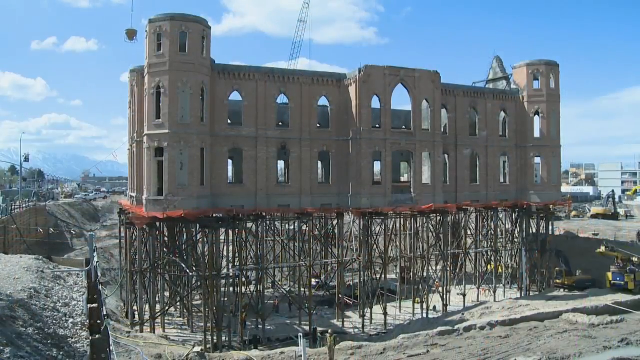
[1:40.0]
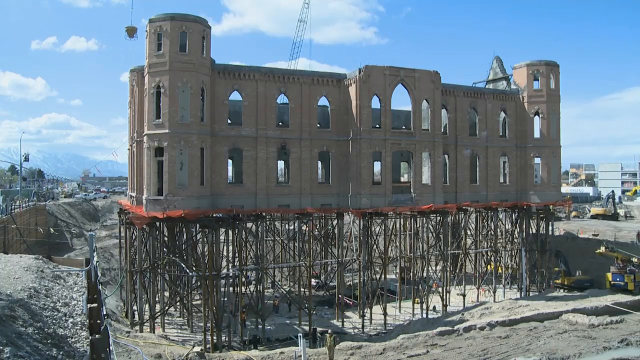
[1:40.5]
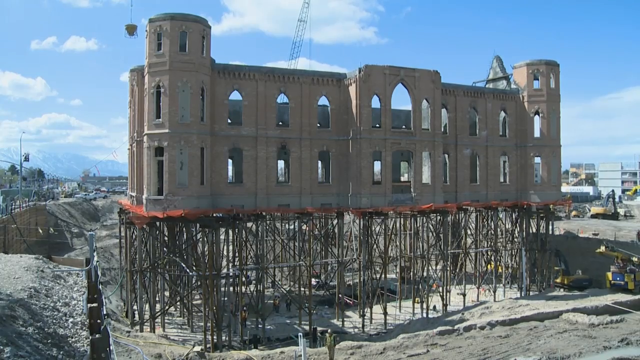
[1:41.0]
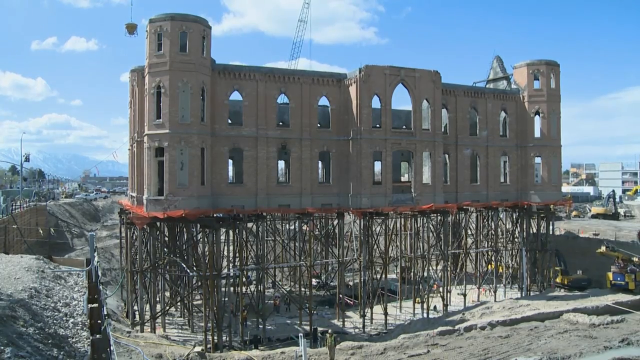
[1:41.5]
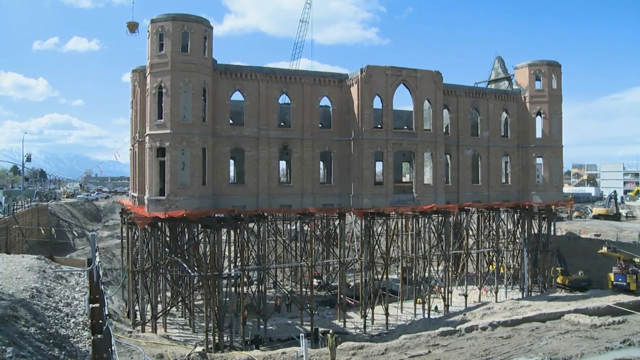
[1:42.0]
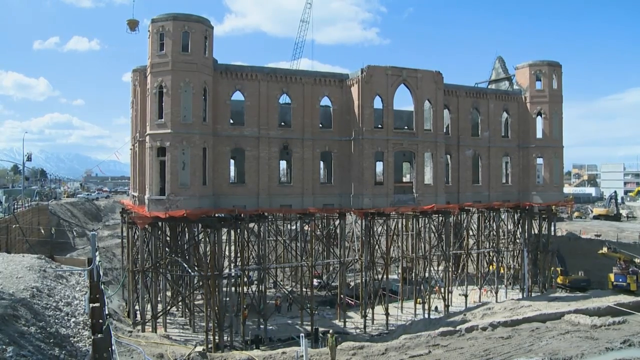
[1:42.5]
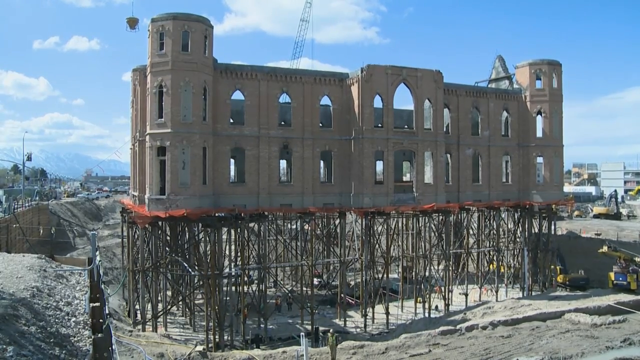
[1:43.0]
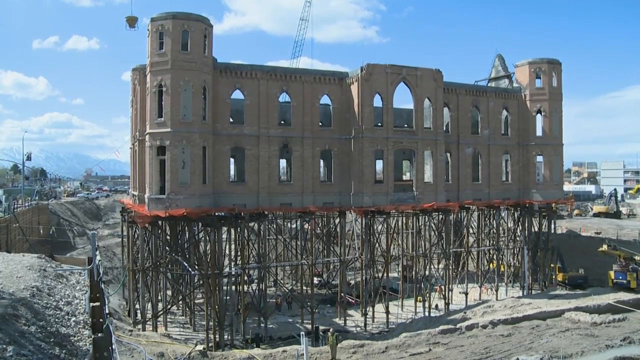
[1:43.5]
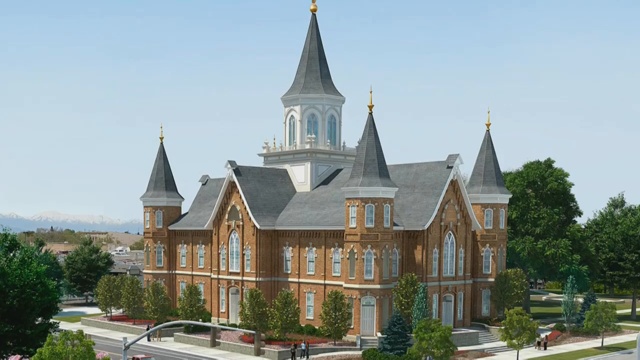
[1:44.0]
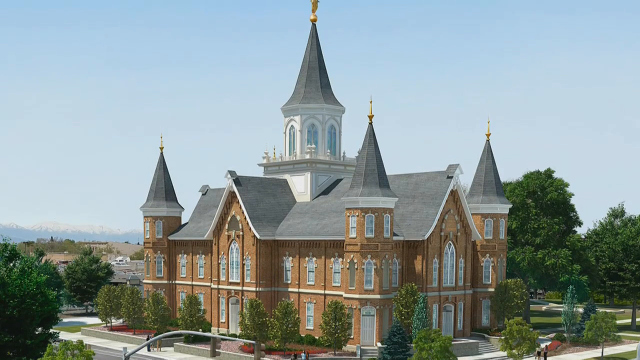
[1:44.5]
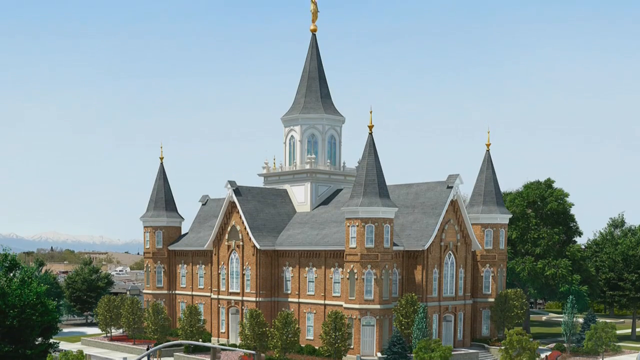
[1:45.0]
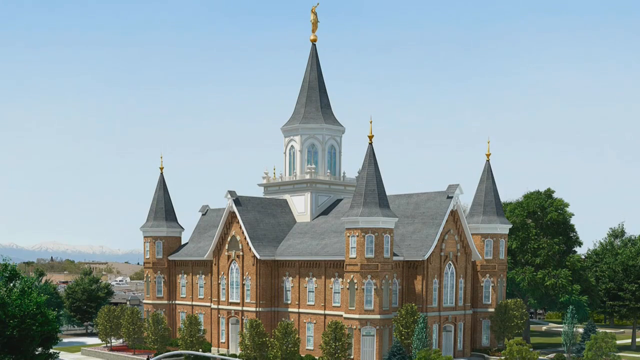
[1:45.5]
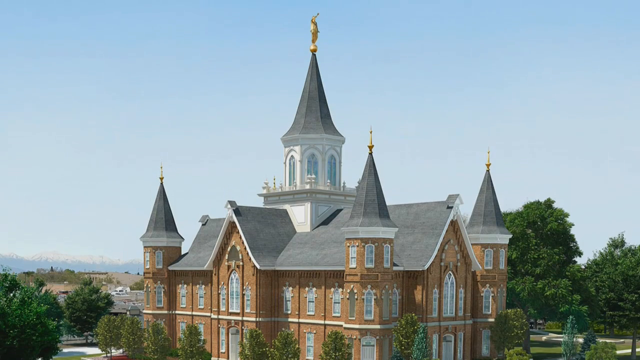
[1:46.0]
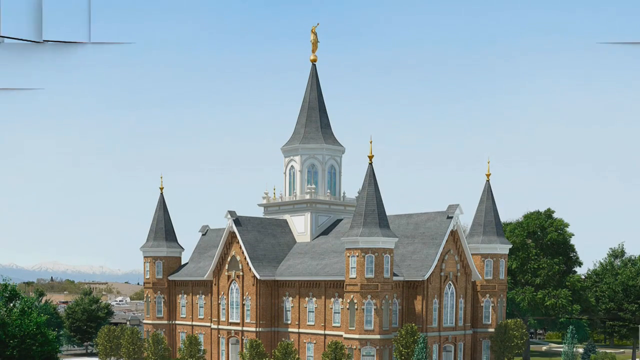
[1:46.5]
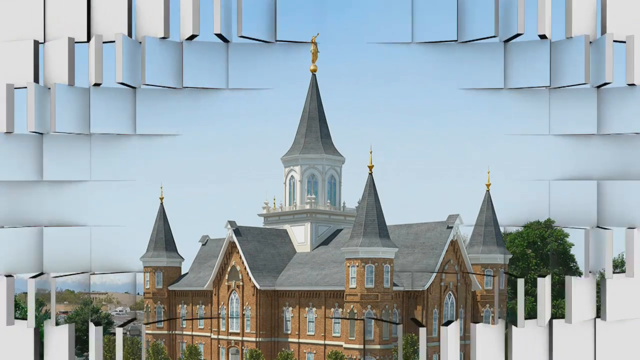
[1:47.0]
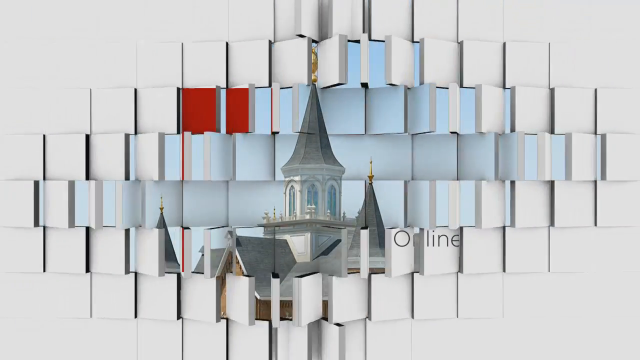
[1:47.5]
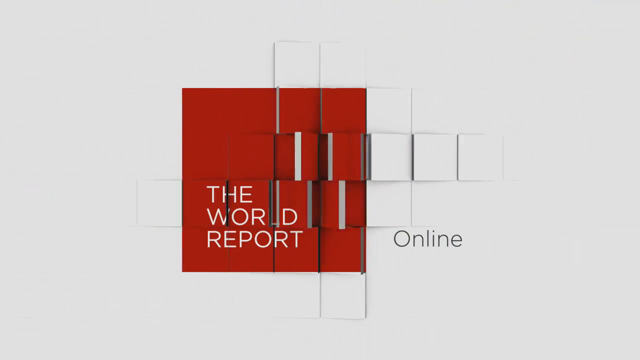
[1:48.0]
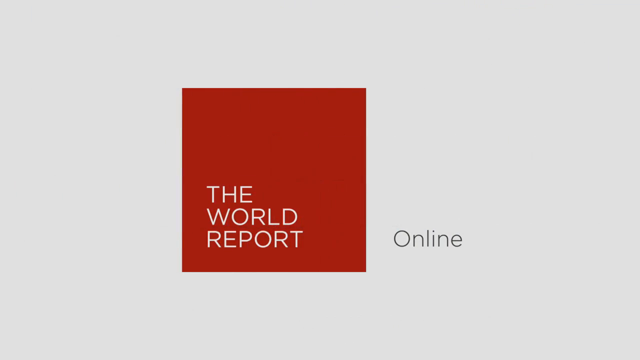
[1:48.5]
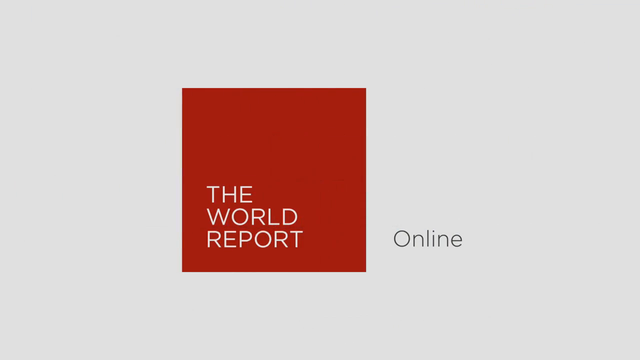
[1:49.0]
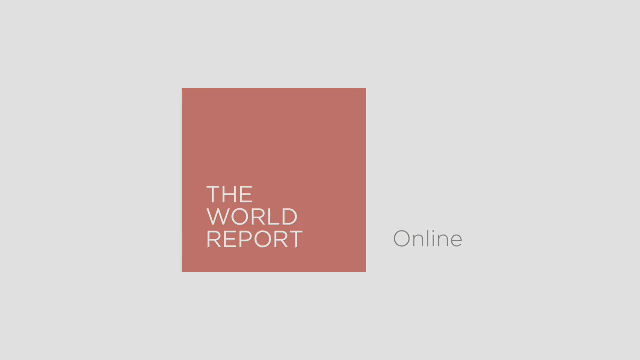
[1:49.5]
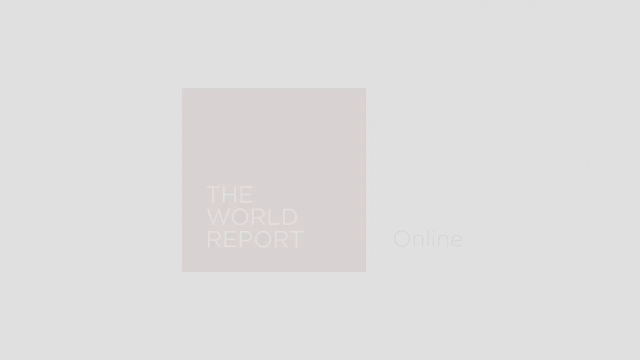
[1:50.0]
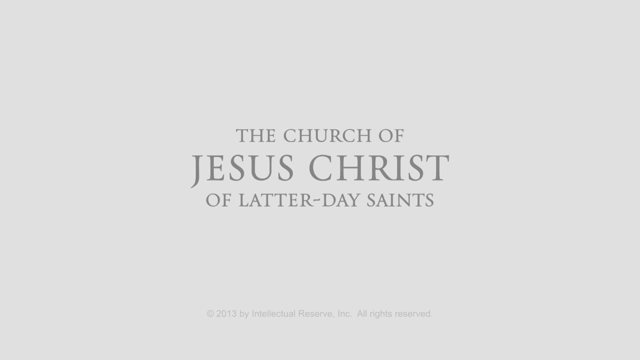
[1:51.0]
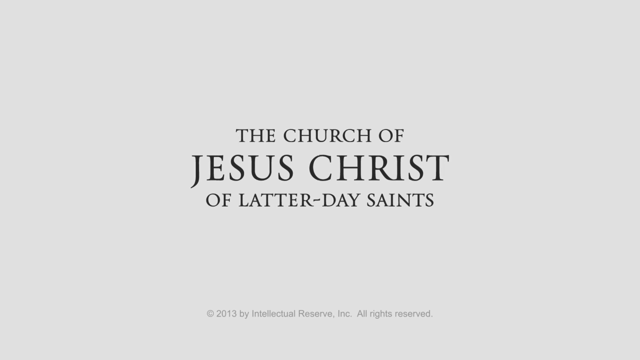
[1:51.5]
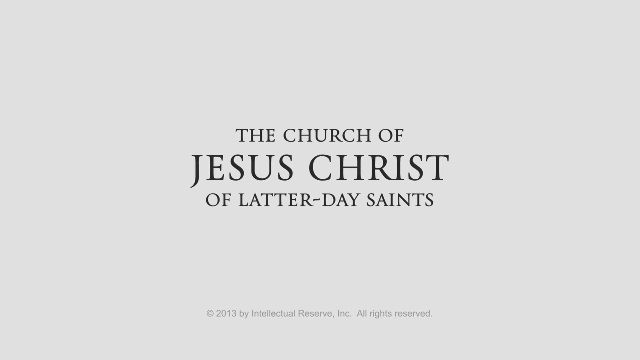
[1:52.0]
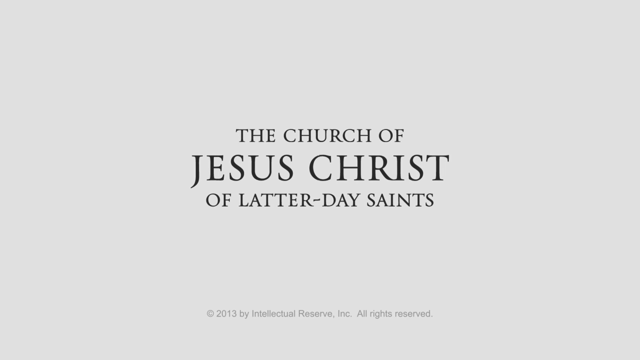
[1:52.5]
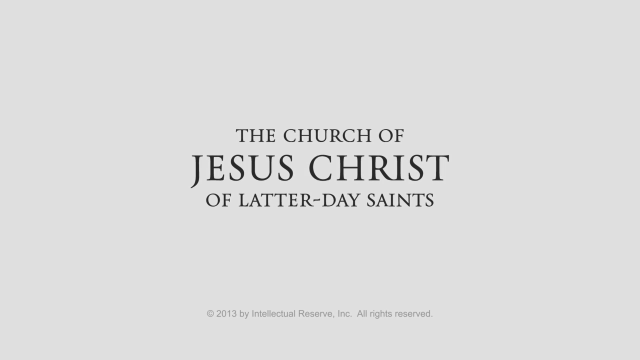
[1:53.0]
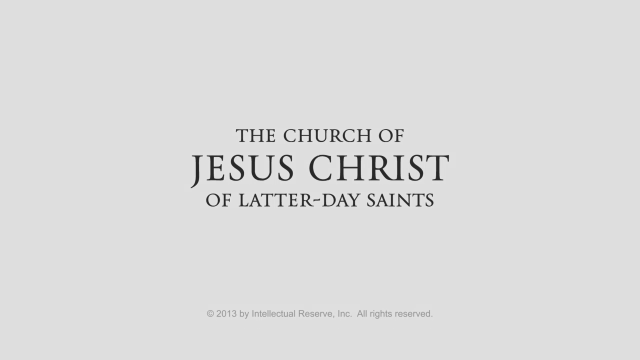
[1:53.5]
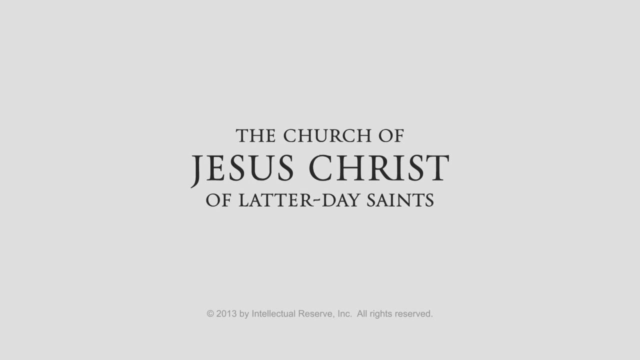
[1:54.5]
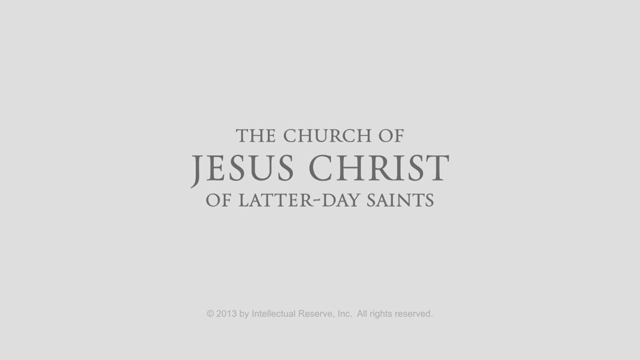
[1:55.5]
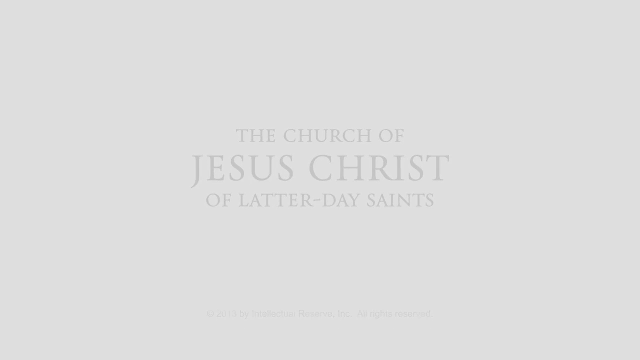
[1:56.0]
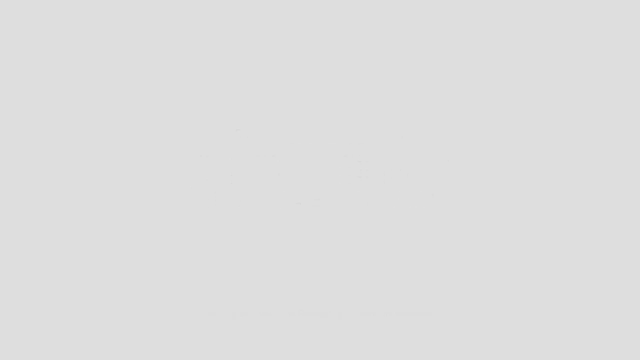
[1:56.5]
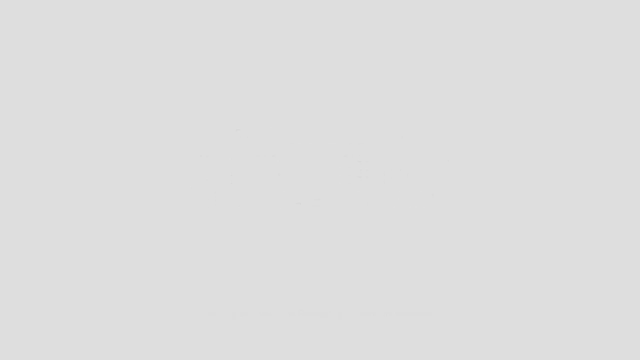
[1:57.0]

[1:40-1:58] An exterior shot shows what looks like a completed image of the church, all done up and looking nice, with text naming the Church of Jesus Christ on what seems to be a tile. The video returns to the exterior view of the church being built with all the scaffolding. Then there is apparently a rendering of what the church will look like completed, with all its adornments. No people appear in this part. An image card reads "the Church of Latter-day Saints 2013 by Intellectual Reserve." These three images cycle over and over.